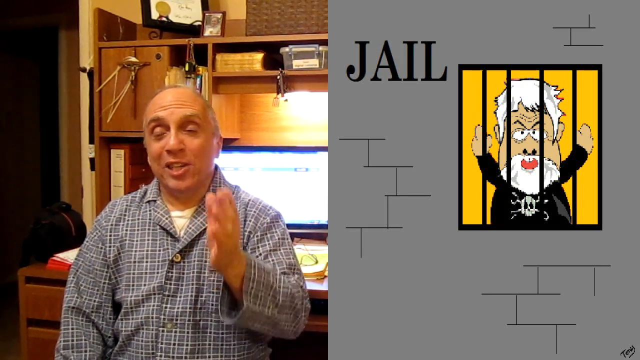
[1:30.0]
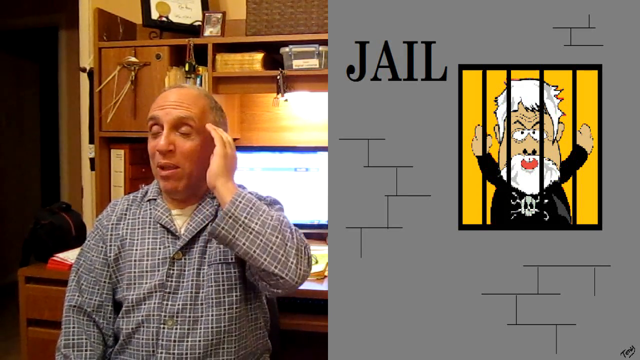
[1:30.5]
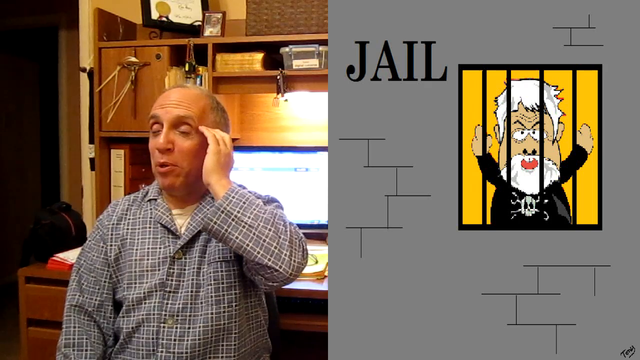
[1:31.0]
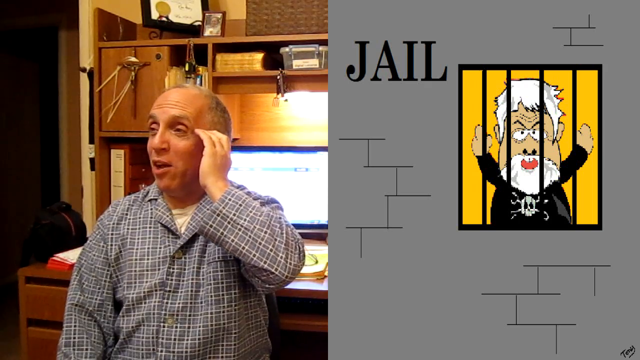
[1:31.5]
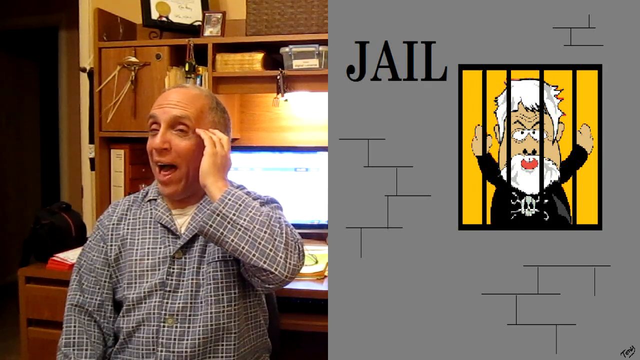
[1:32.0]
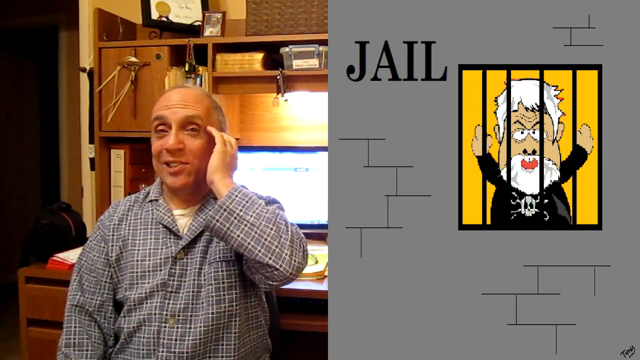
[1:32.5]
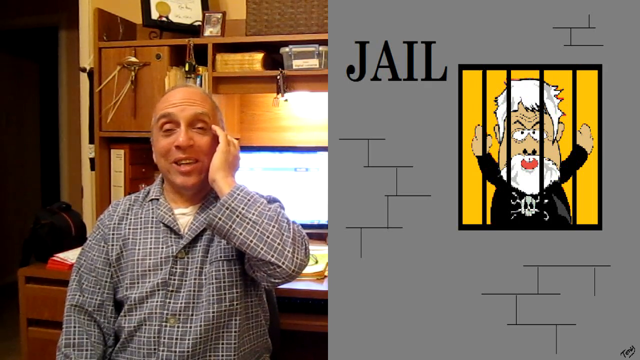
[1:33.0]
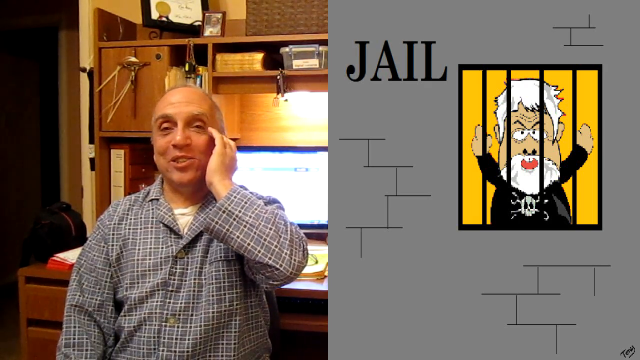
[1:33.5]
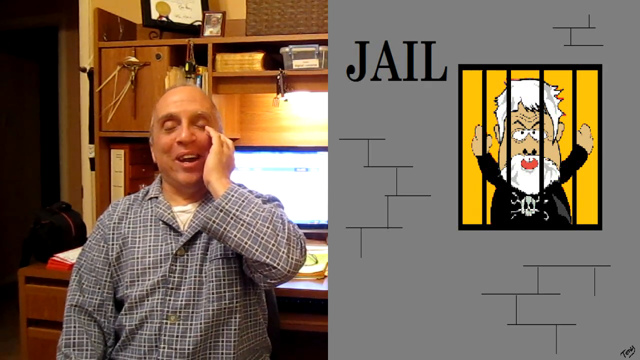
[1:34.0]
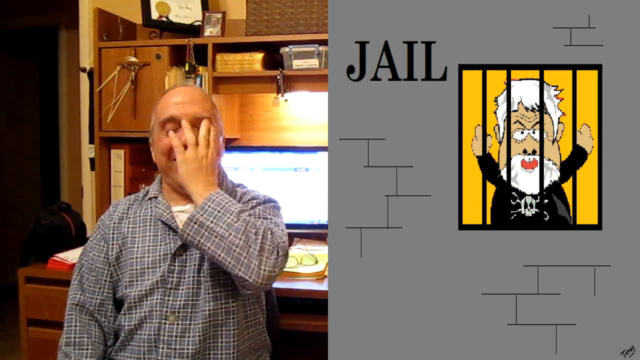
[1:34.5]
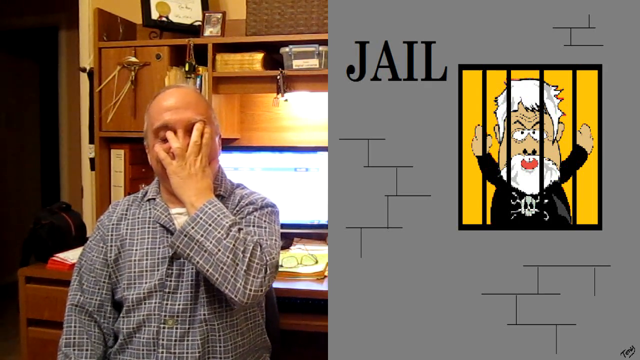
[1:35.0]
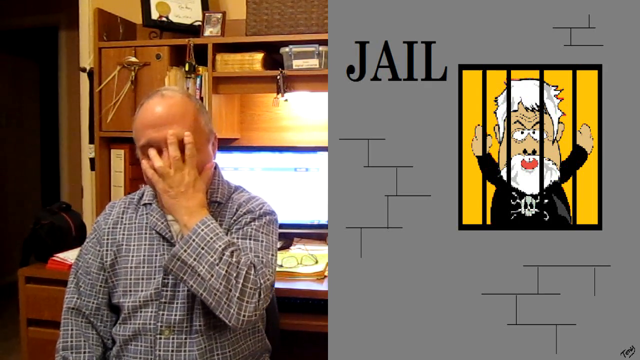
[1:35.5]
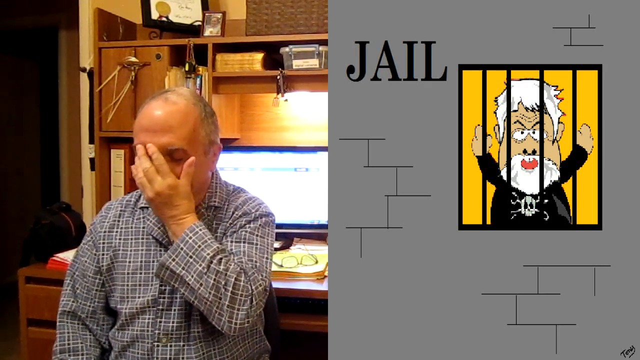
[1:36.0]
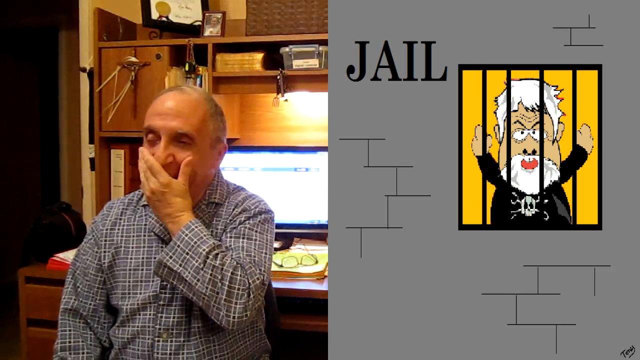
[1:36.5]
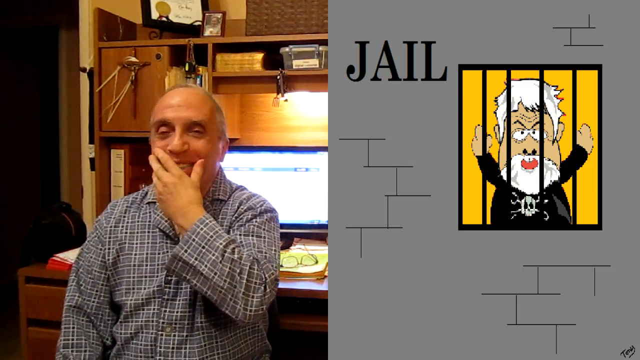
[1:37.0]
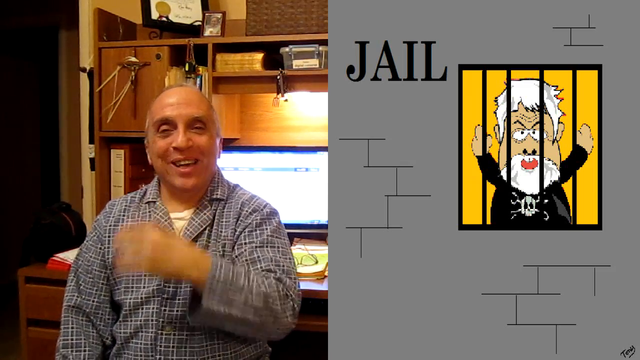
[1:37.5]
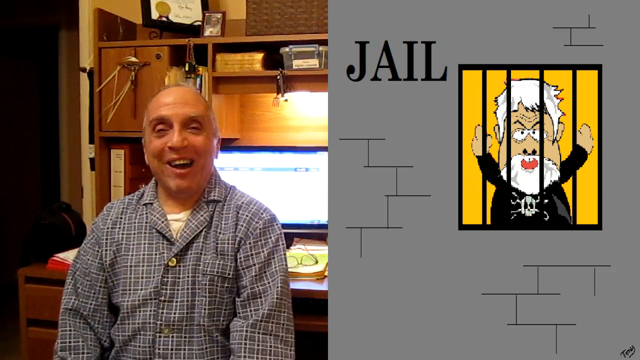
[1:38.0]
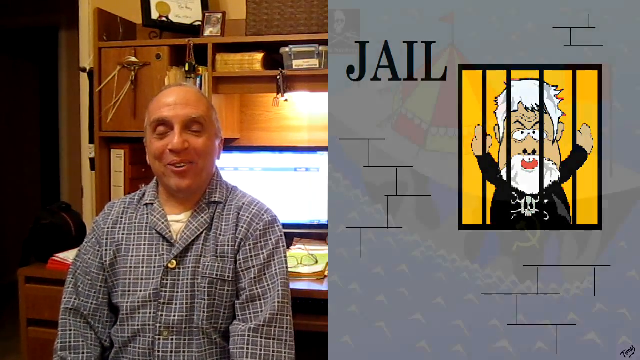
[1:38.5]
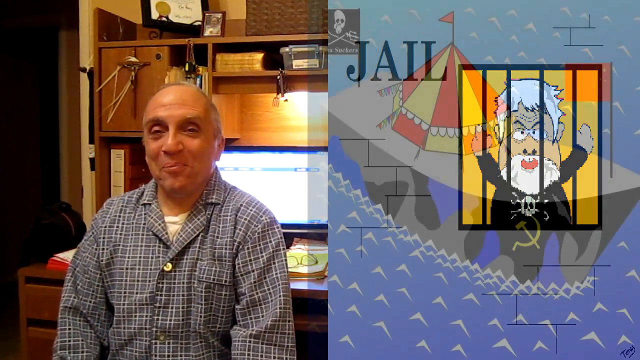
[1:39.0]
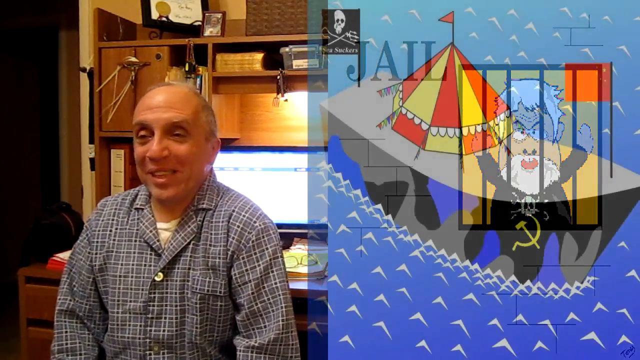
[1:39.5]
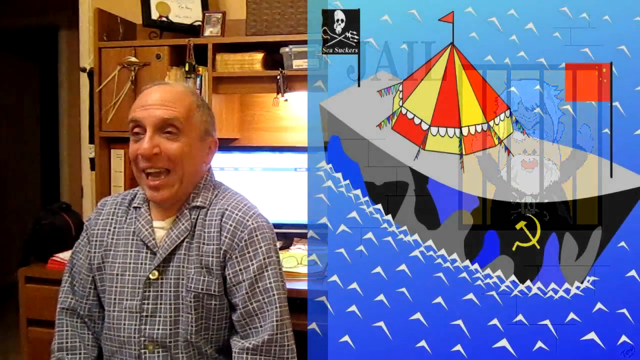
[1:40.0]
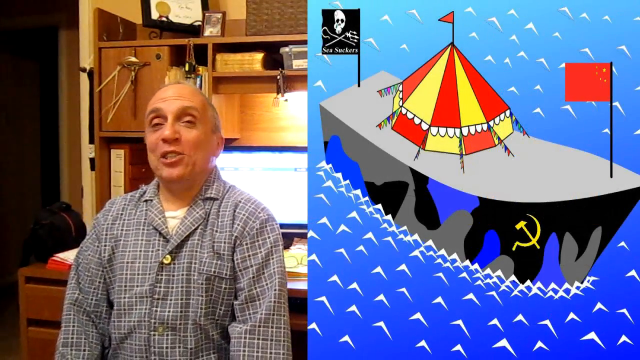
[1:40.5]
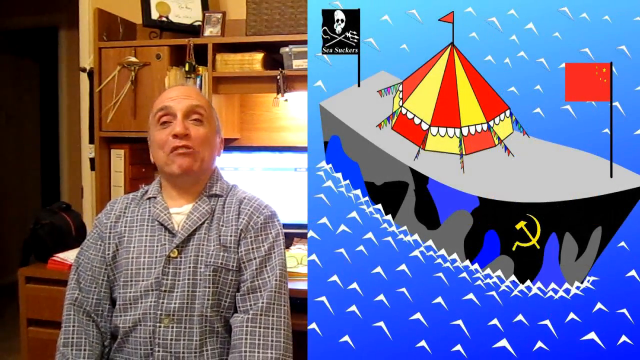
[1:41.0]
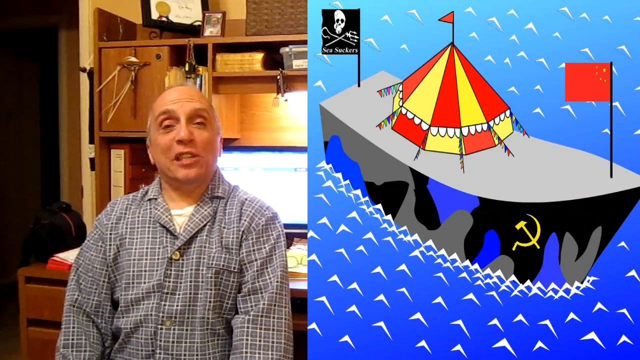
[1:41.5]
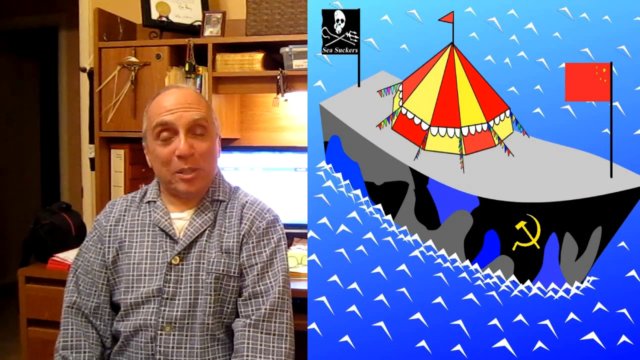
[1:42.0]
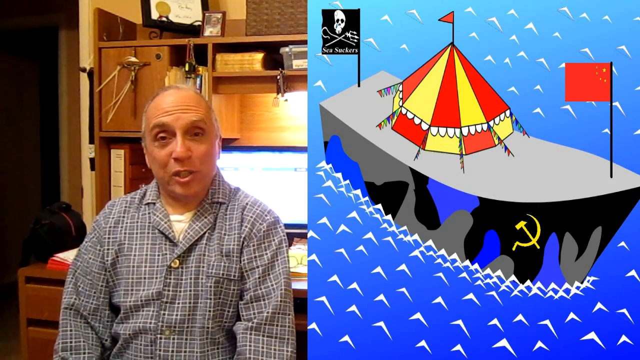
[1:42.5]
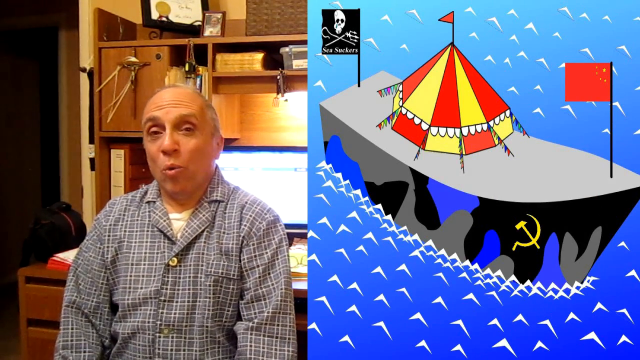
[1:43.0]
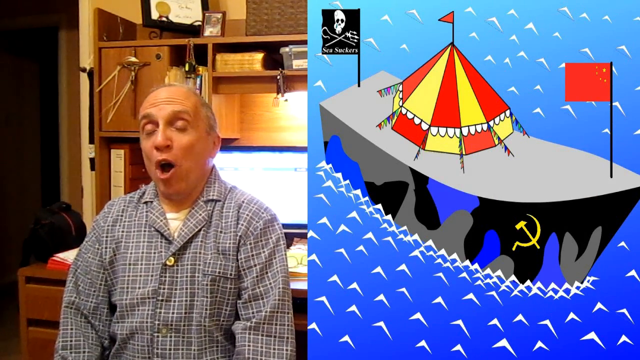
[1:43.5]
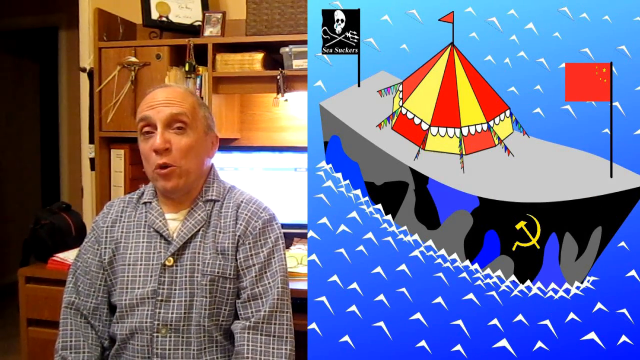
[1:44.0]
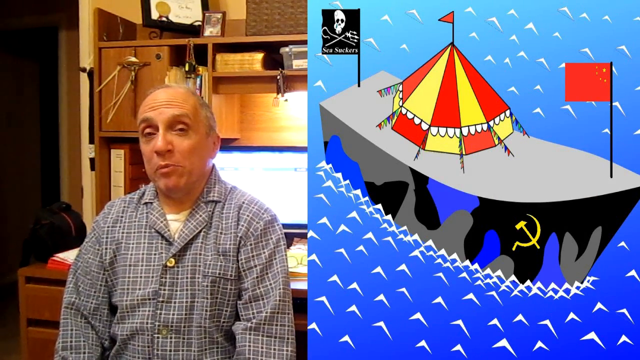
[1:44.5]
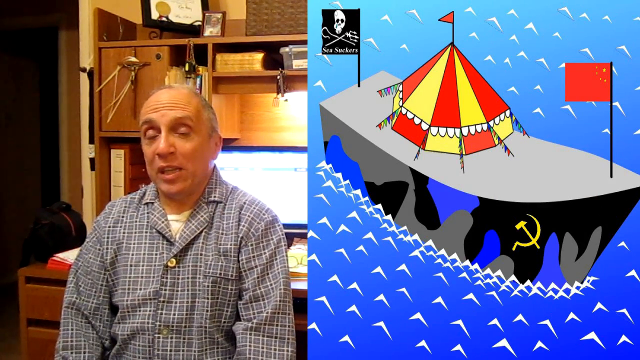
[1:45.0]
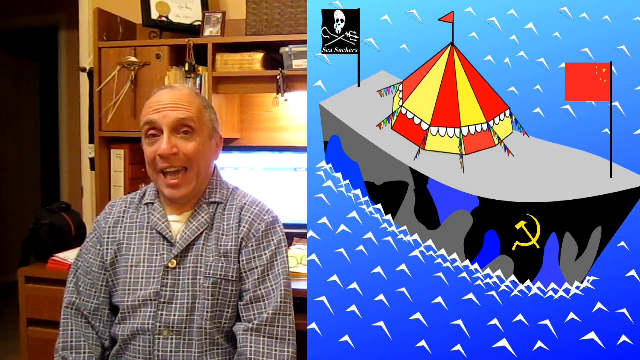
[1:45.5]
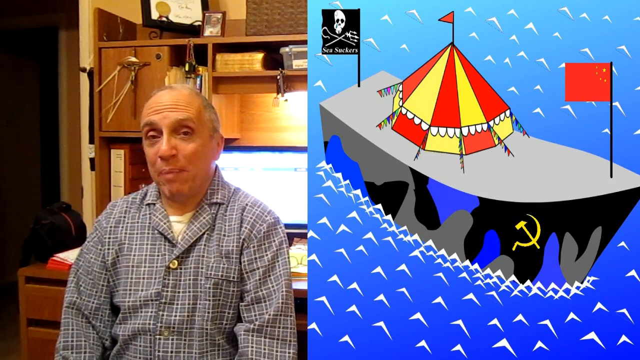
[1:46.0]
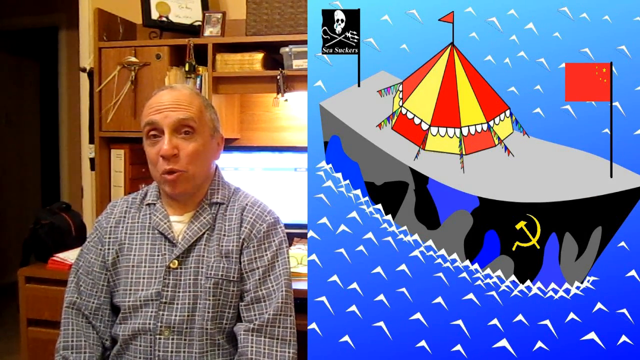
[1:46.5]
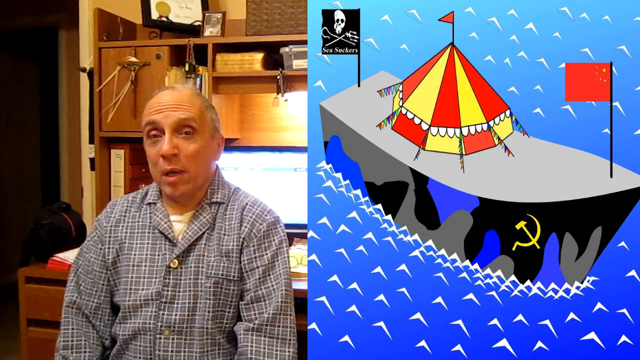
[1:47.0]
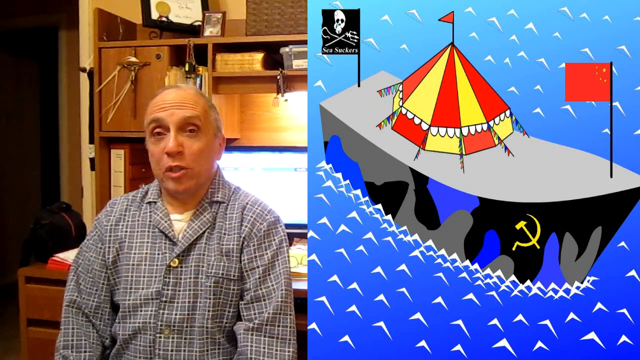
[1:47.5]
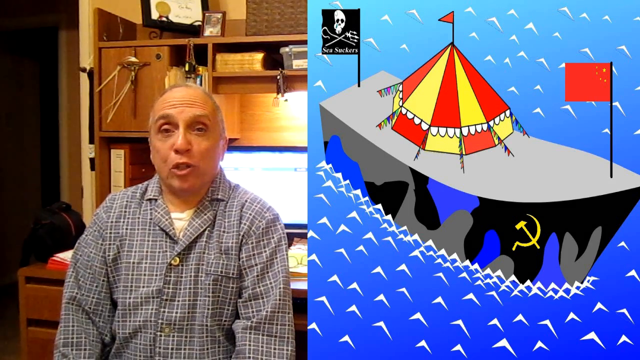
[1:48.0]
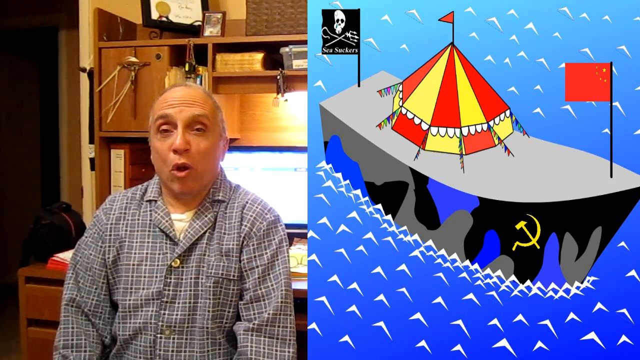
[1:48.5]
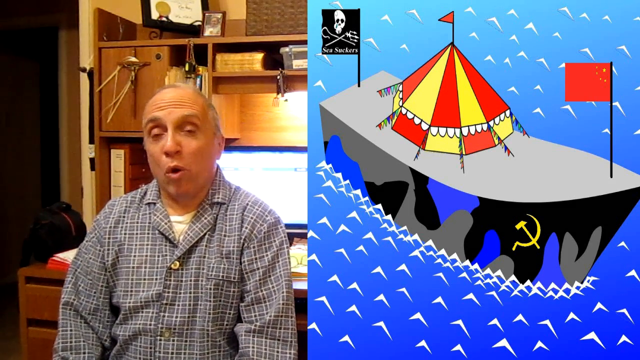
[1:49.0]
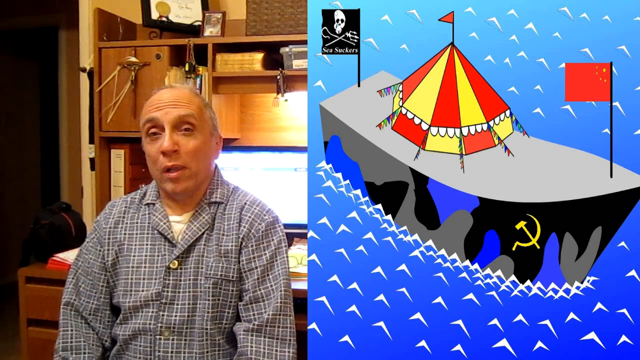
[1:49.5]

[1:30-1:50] The man continues talking while the drawing of the man behind the jail bars stays on screen. He rubs his face, and the image then transitions into a boat in the water, drawn in a similar animated sketch style. The boat has a skull and crossbones, a kind of circus structure with a Soviet icon, and something kind of like a camel. A red communist or Chinese flag is on top, and a weird blue, black and gray camel-like design is on the bottom. The water contains animated little white triangles and goes from darker blue at the bottom to lighter blue on top. The boat appears in a split screen on the right-hand side, taking up almost half the screen, just as the earlier pages took up around half the screen when they were displayed.